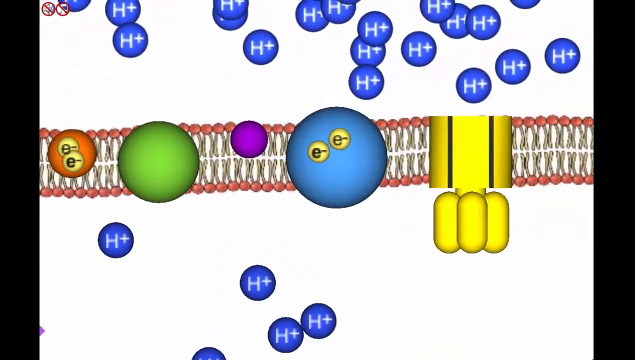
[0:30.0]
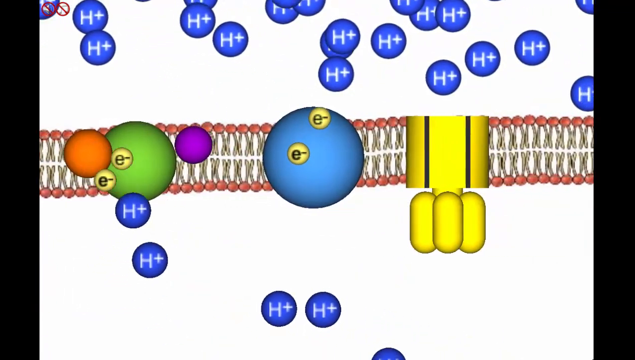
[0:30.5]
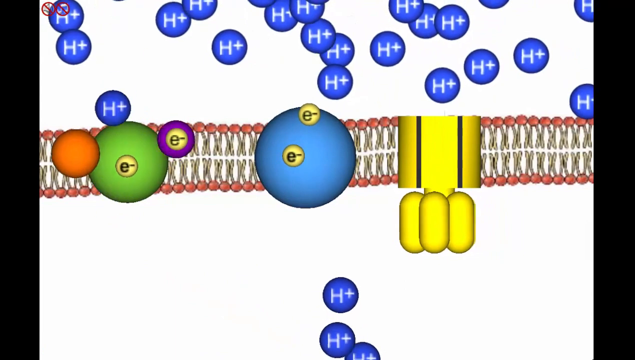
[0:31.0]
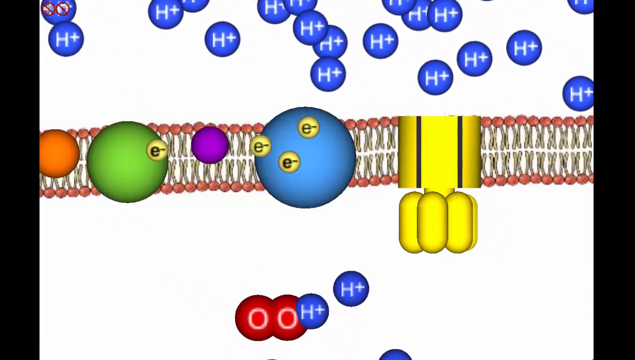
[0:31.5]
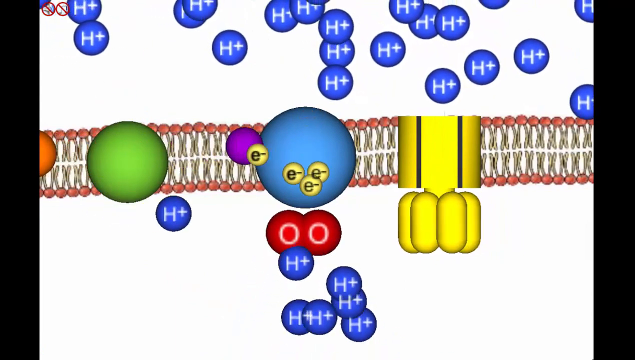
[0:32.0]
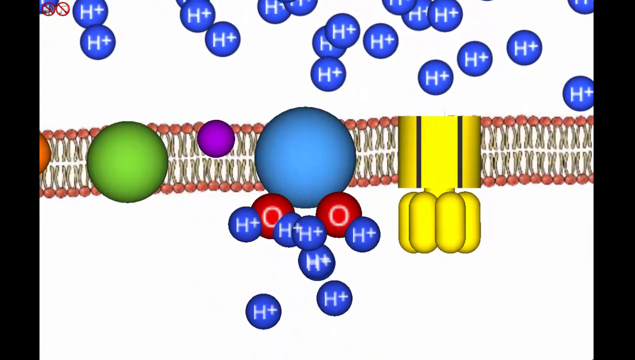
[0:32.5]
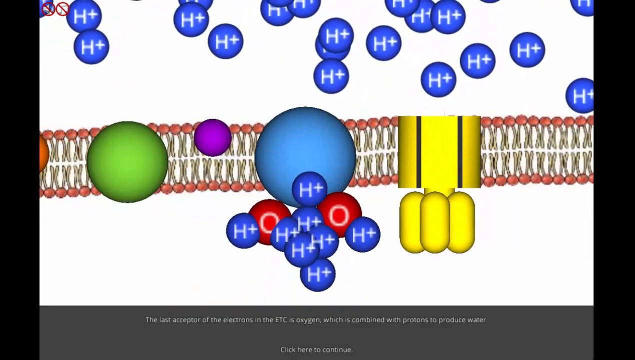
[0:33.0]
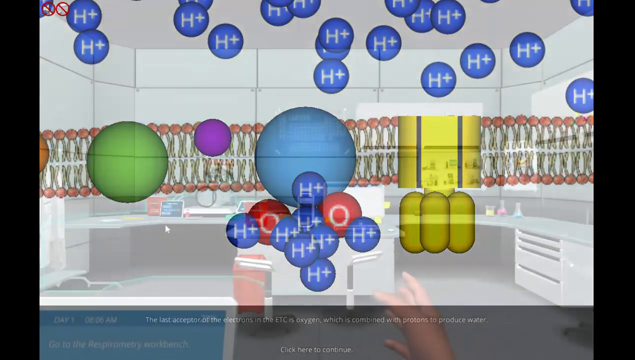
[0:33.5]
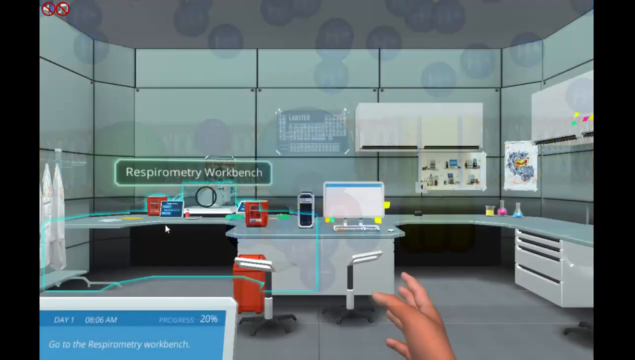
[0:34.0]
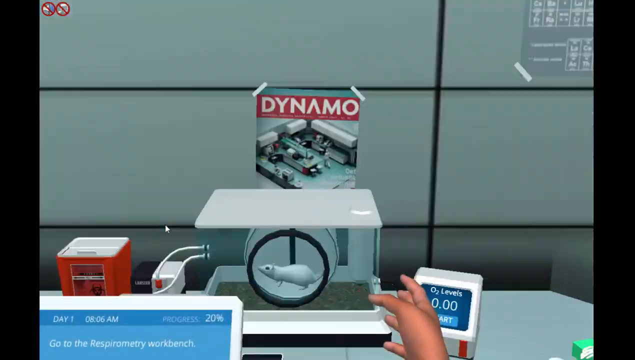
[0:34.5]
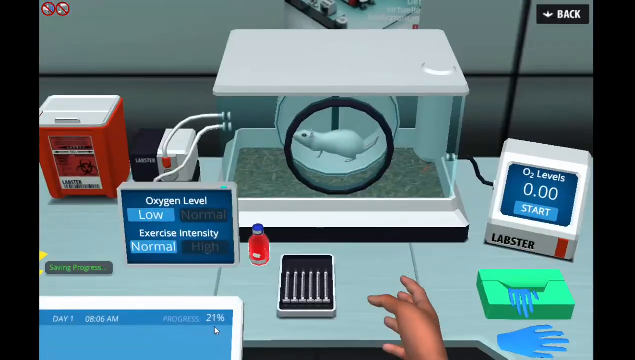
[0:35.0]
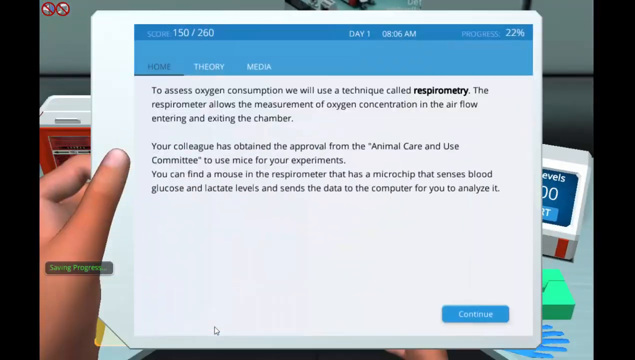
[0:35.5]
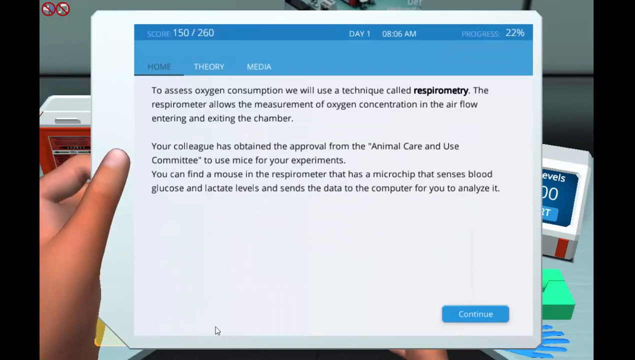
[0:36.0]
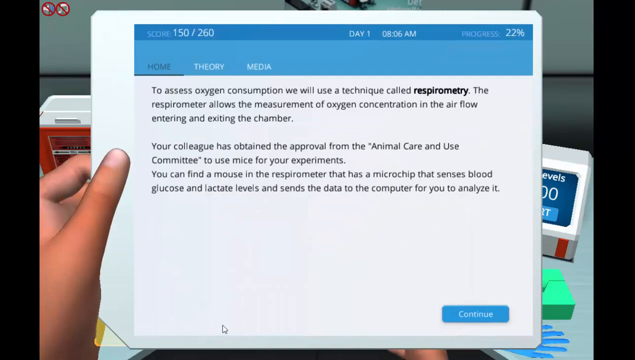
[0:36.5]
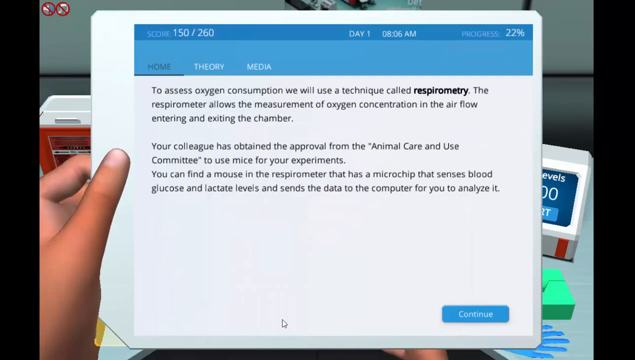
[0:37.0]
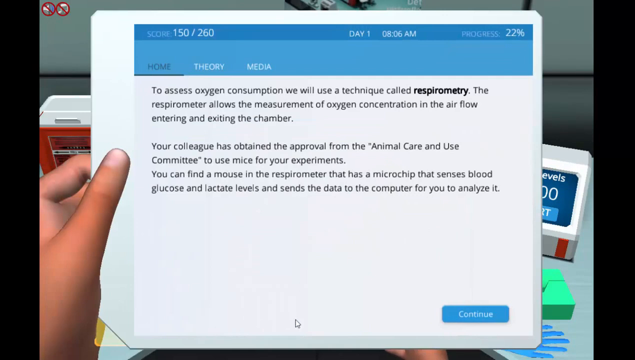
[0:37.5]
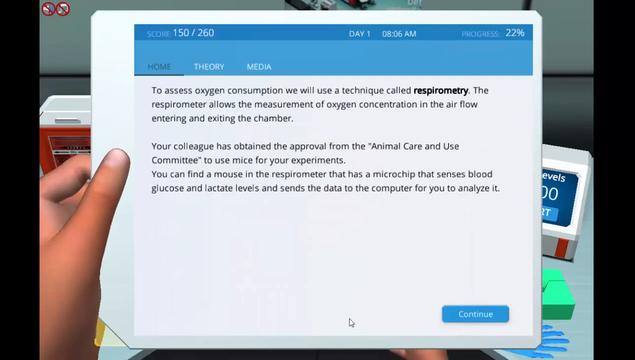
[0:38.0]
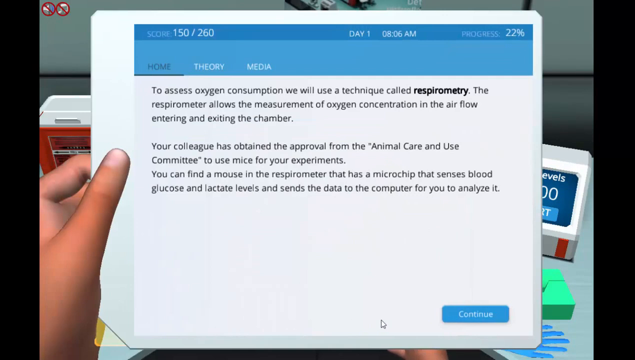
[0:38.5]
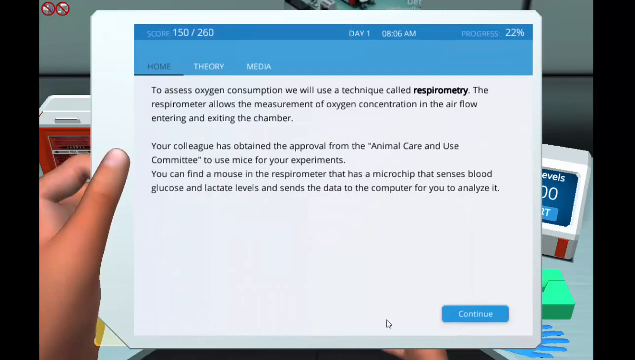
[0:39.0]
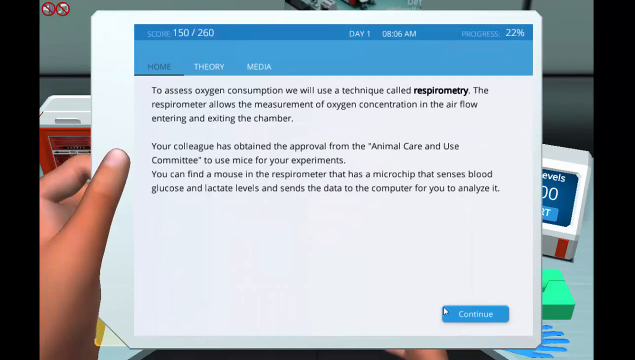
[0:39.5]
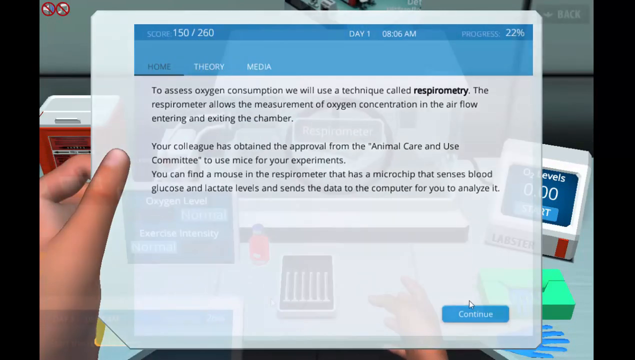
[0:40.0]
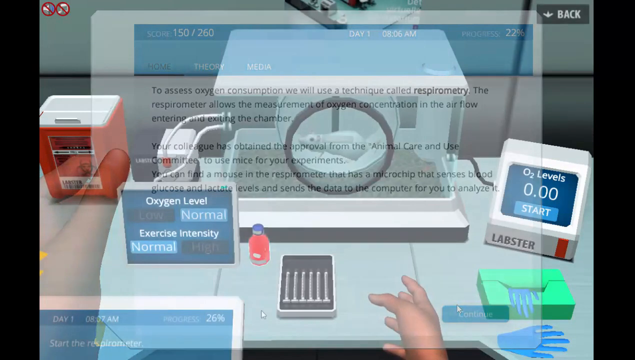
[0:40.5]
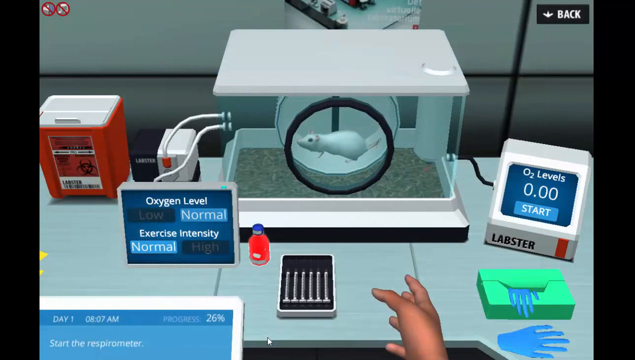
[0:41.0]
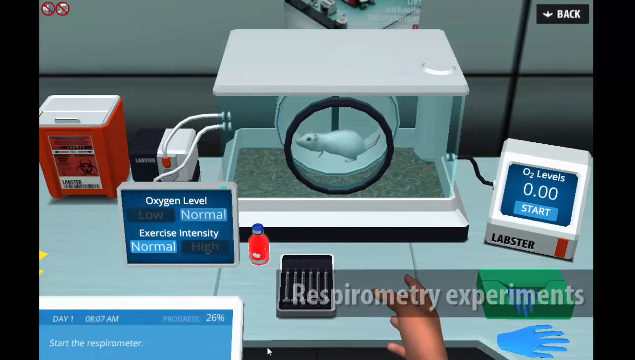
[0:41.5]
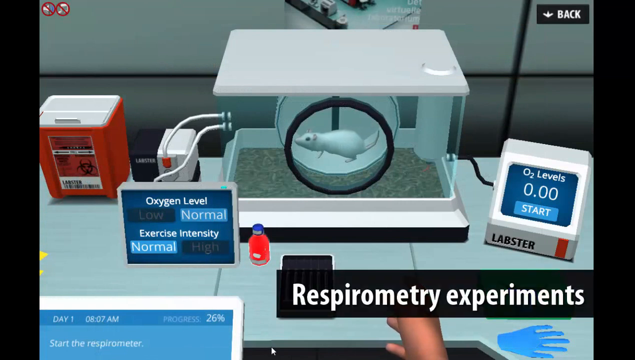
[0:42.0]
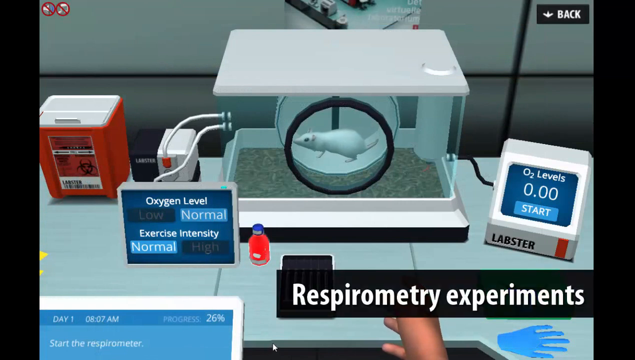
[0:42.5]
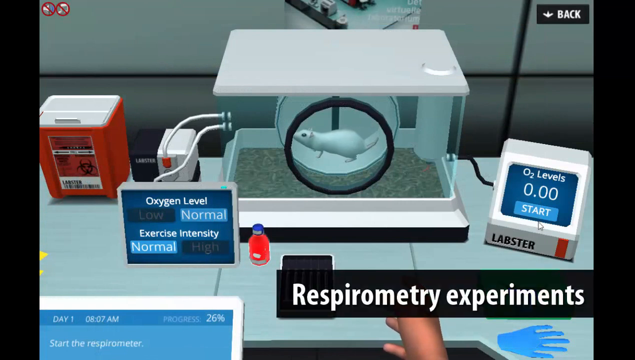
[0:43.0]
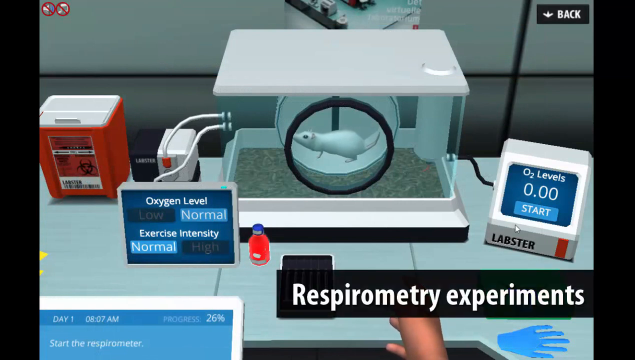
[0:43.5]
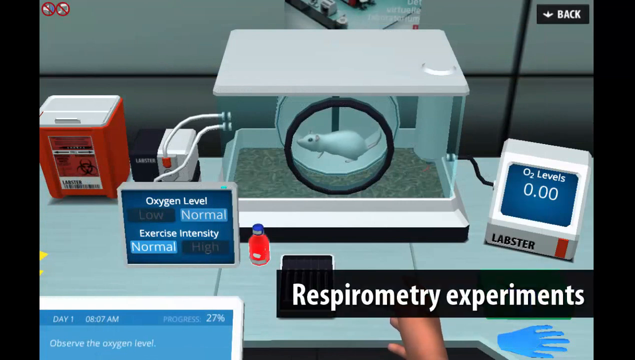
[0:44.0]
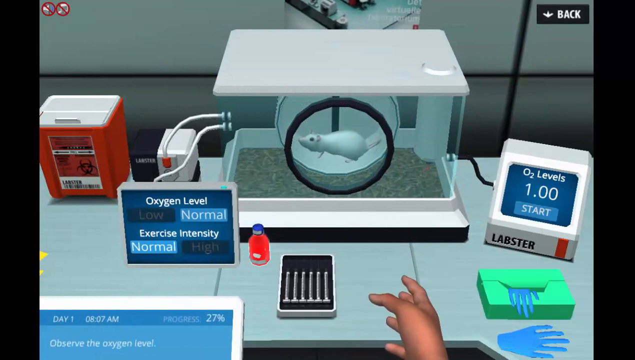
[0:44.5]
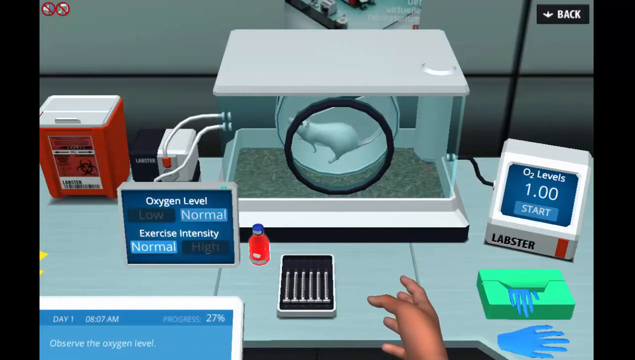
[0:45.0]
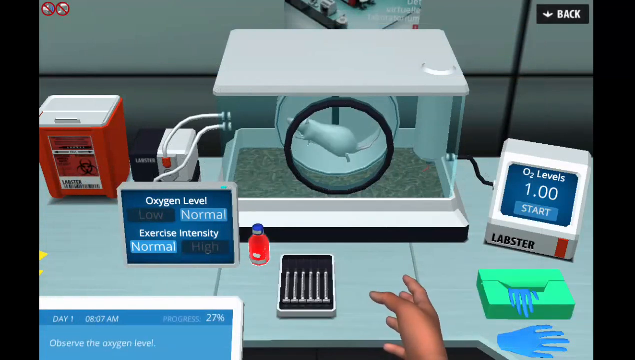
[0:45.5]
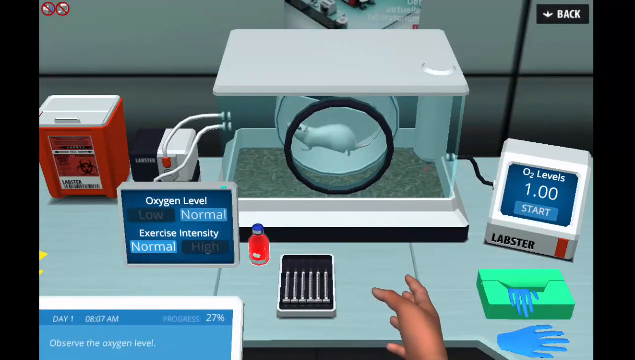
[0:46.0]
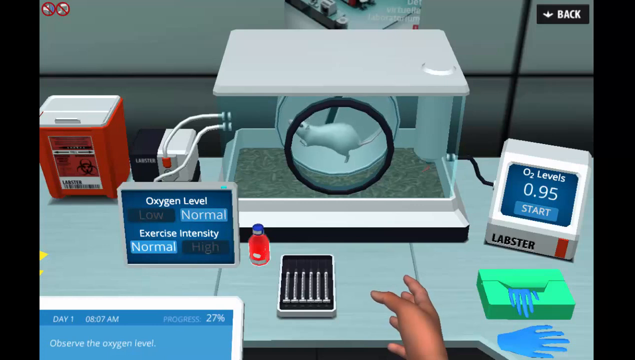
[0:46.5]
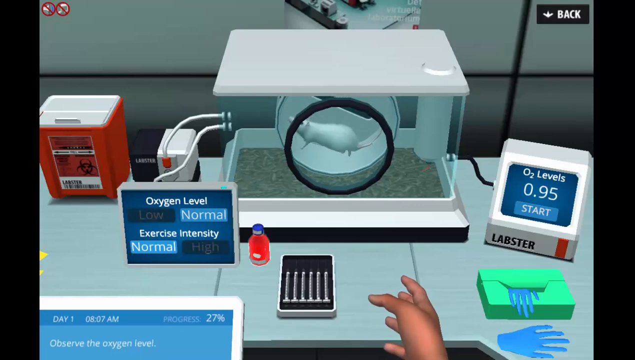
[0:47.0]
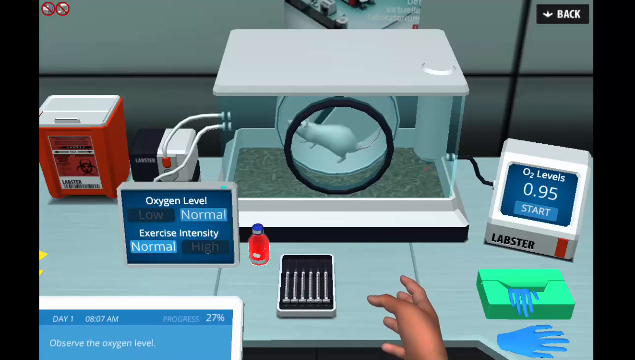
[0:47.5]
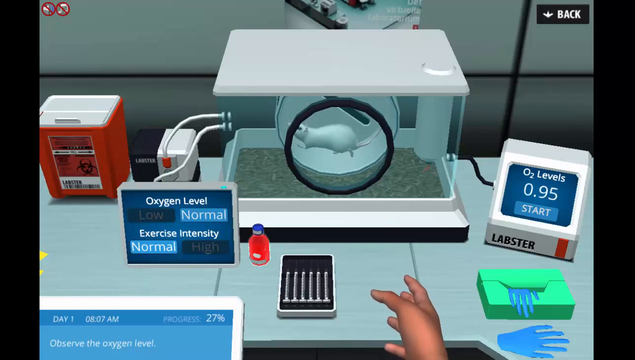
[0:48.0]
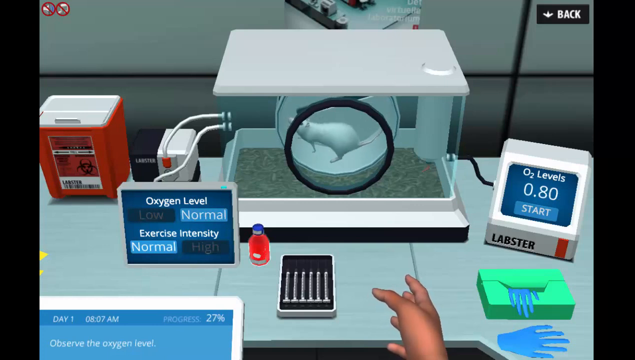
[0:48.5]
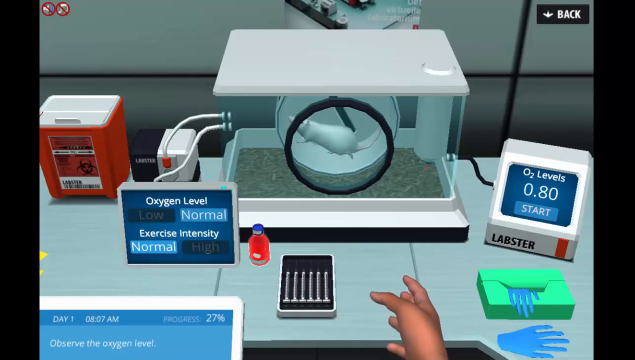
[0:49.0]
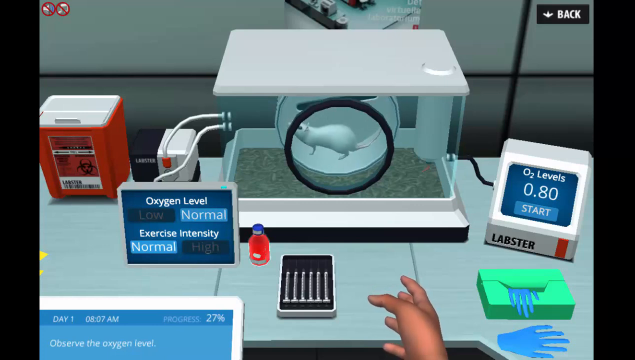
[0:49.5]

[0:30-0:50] On a white screen, curvy lines with red dots on their tips run horizontally from left to right across the whole screen, all touching and connected. Above them are a bunch of blue circles with a white letter H and plus sign on them, and underneath this railroad-track-looking structure, in the middle, are two red circles with white O's and two blue circles with white H's and plus signs. It looks like a video game screen. The scene cuts to a digital lab table with a small cage containing a hamster wheel, with a white rat in the wheel. On the left side, two tubes connect the cage to a small screen that says "oxygen level, low, exercise intensity, normal". On the right side, another little screen says "O2 levels, 0.00 start", and at the bottom of that piece it says "the labster". In front of the cage the person's hands appear and pull up a sheet of paper that says "to assess oxygen consumption, we will use a technique called respirometry. The respirometer allows a measurement of oxygen concentration in the airflow entering and exiting the chamber. Your colleague has obtained approval from the Animal Care and Use Committee to use mice for your experiments. You can find a mouse in the respirometer that has a microchip that senses blood glucose and lactate levels and sends the data to the computer for you to analyze it." The sheet goes away, "Respirometry Experiments" appears in the bottom right-hand corner of the screen, and the white rat is shown walking in the hamster wheel.